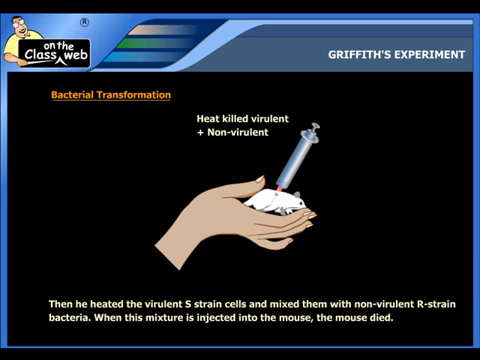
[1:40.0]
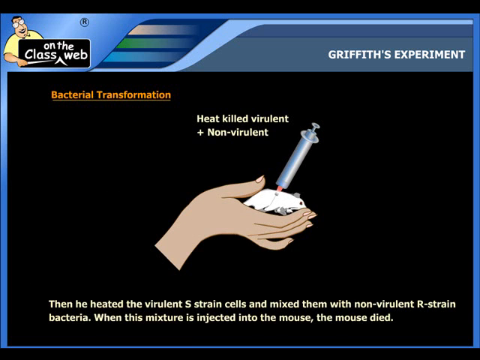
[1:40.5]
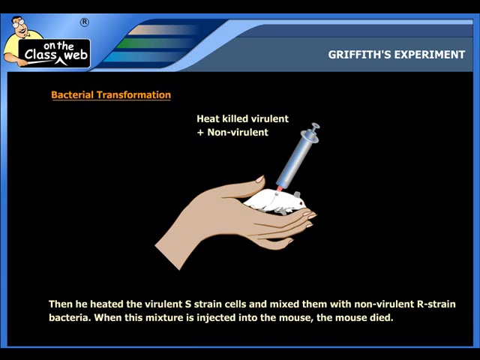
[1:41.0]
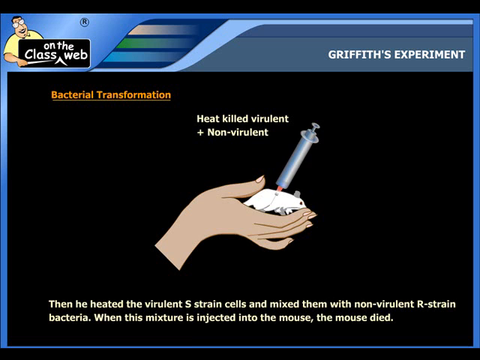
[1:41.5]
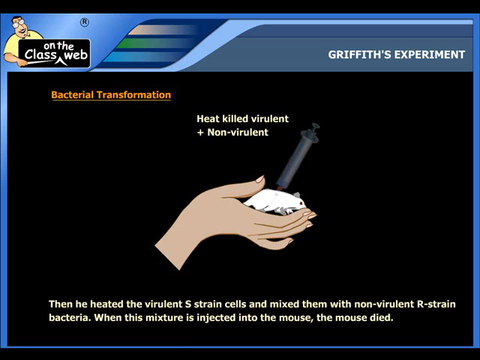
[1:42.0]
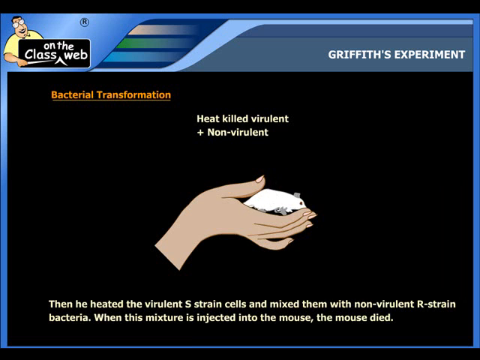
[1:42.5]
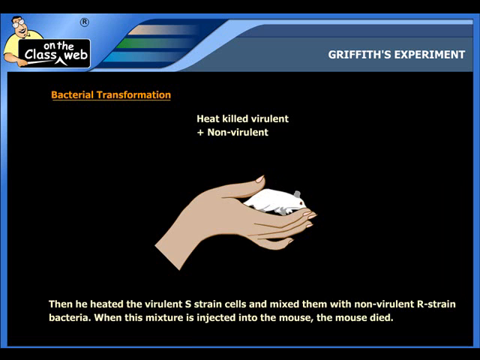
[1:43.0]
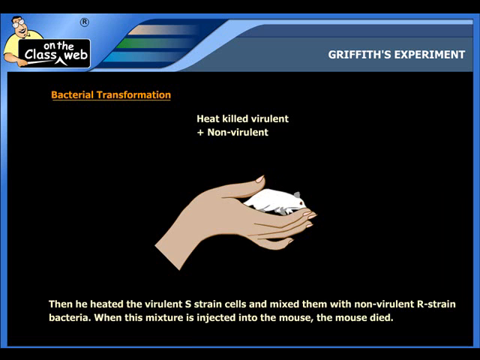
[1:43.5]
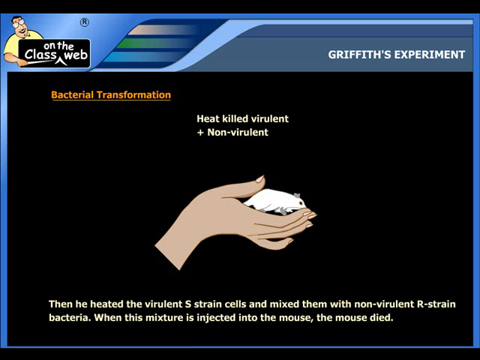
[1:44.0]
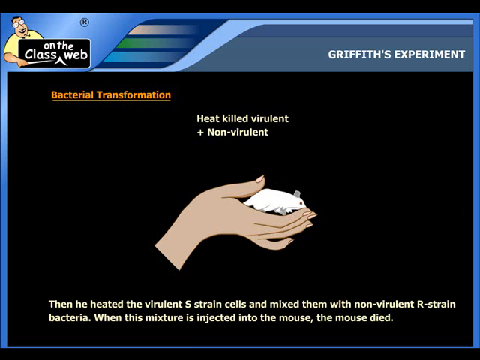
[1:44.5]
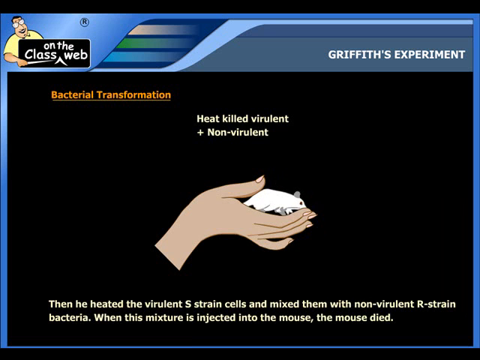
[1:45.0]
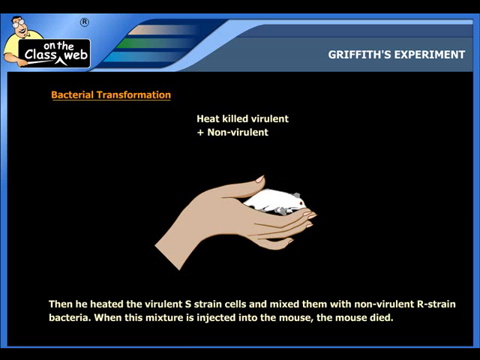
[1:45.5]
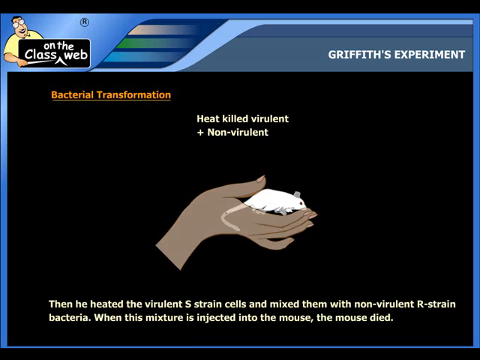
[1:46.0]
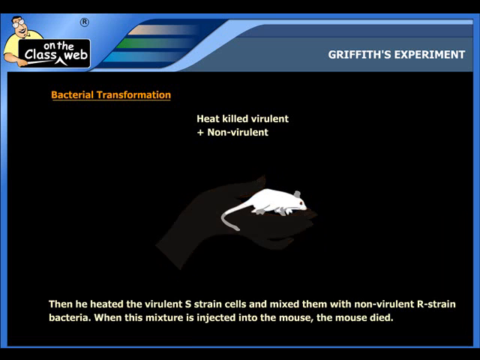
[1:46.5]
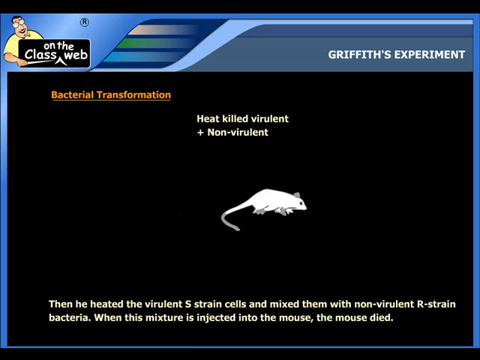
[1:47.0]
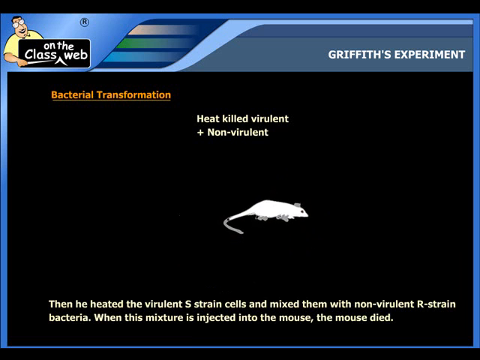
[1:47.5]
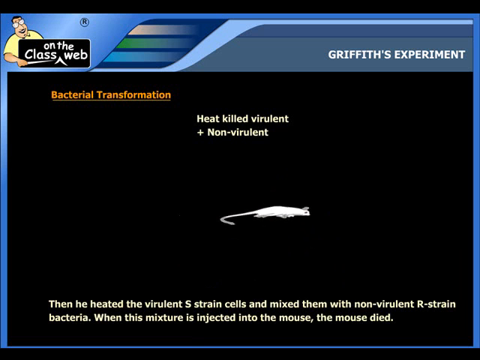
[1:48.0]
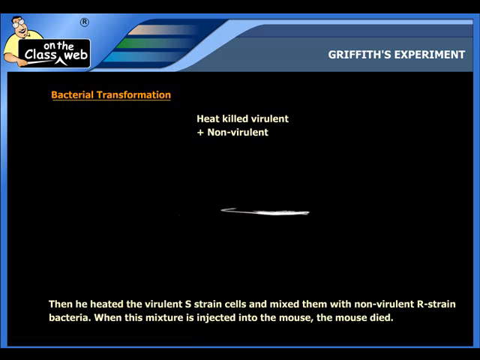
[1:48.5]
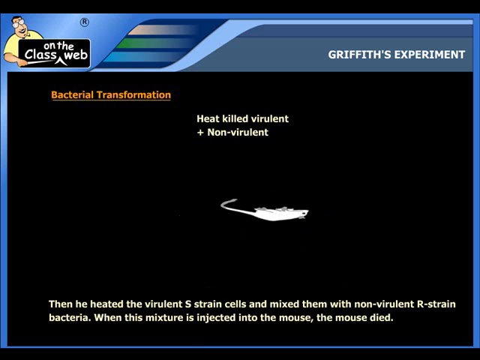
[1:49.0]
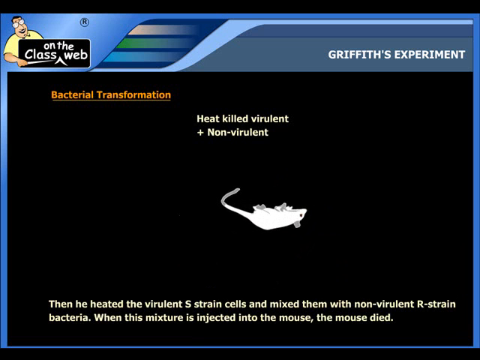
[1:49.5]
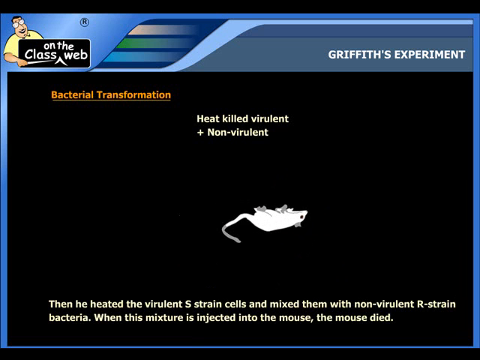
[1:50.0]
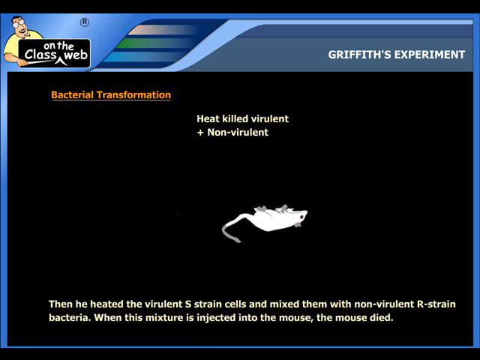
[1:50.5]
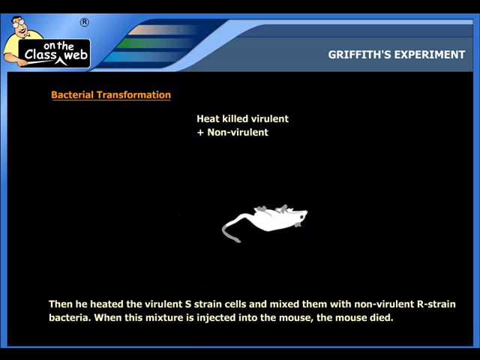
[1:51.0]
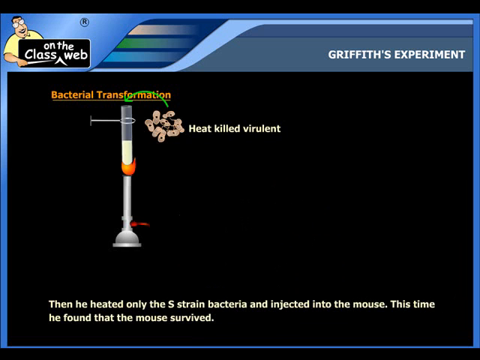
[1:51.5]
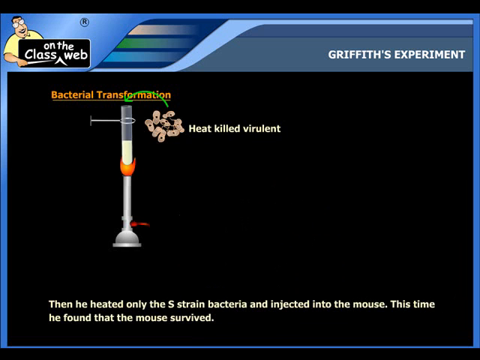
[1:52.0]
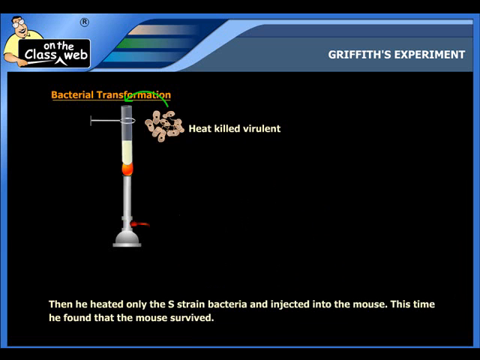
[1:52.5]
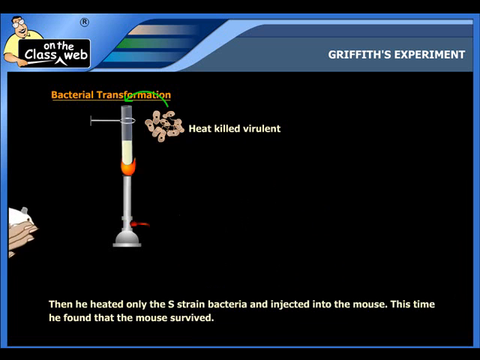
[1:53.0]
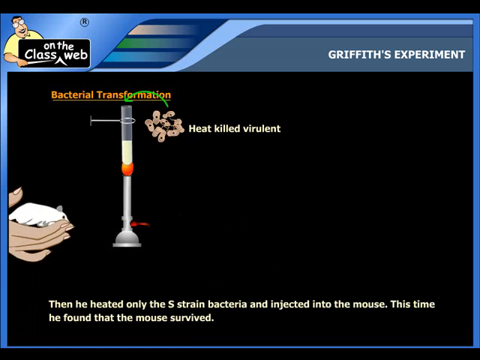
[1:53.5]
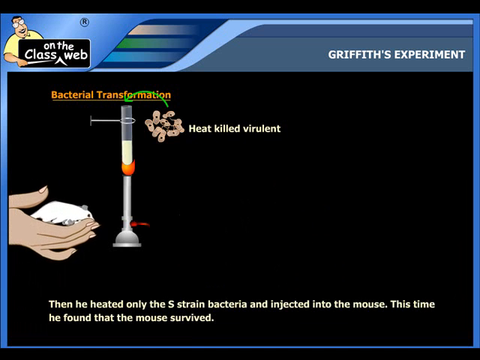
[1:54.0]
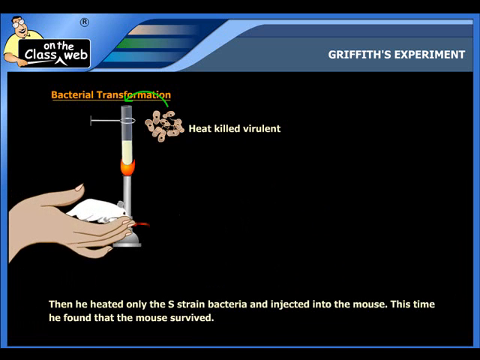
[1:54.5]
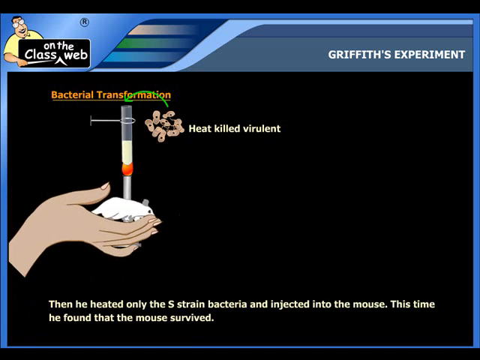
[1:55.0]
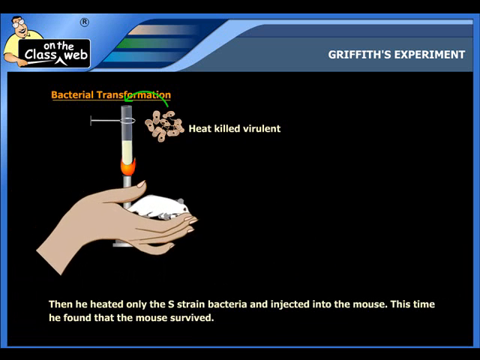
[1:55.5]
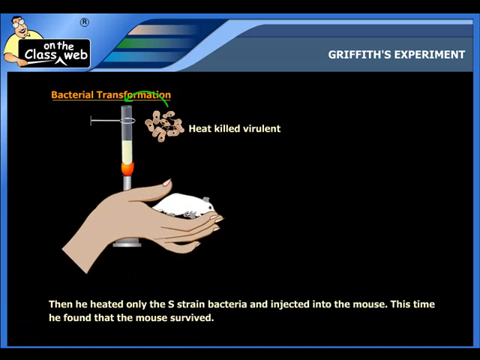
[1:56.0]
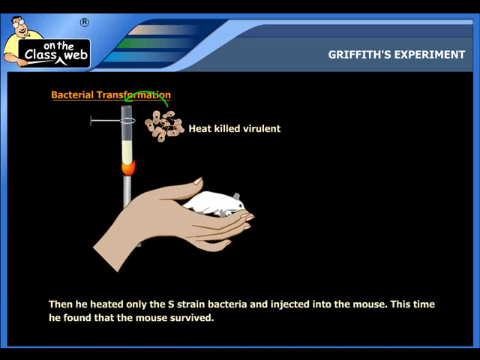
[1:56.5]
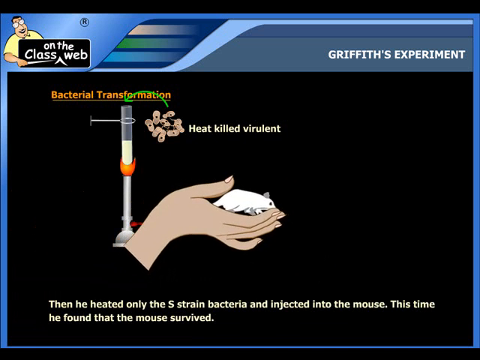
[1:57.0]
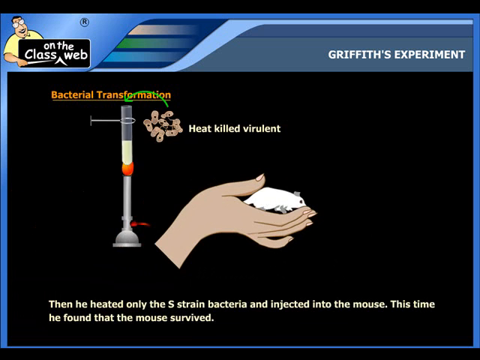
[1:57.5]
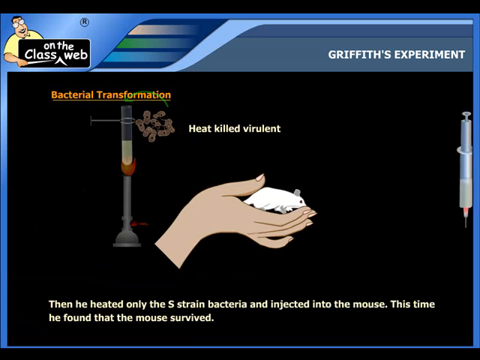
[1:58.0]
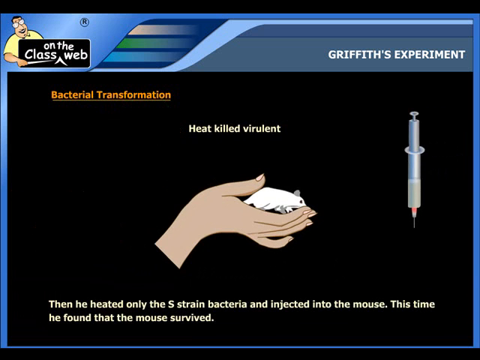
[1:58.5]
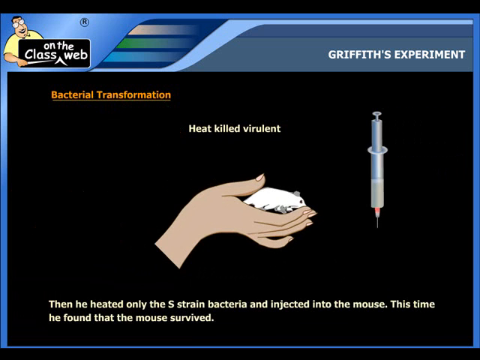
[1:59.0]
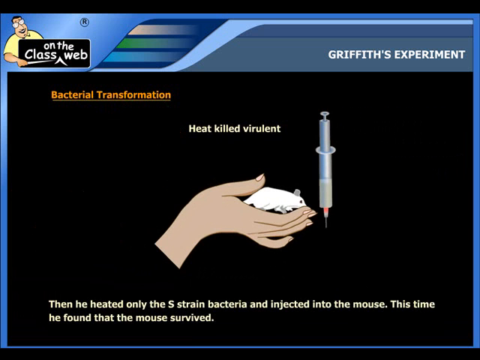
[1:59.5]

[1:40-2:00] In the top left corner is a little cartoon man who looks like a teacher, with glasses, dark hair and a yellow shirt. His right hand reaches around a sign with a pointer; the sign has a black background and white lettering that says "Own the class web." To the right, white letters read "Griffith's Experiment." On the main page, orange letters on a black background read "Bacterial transformation." In the middle underneath, it says "heat-killed virulent + non-virulent." A little cartoon right hand cradles a white lab mouse with a syringe in its back. Text at the bottom reads: "heated the virulent S-strain cells and mixed them with non-virulent R-strain bacteria. When this mixture is injected to the mouse, the mouse died."